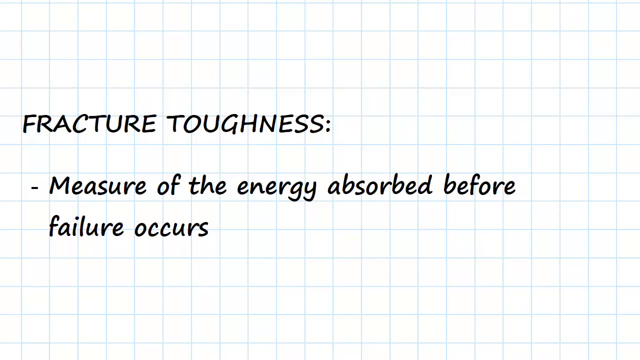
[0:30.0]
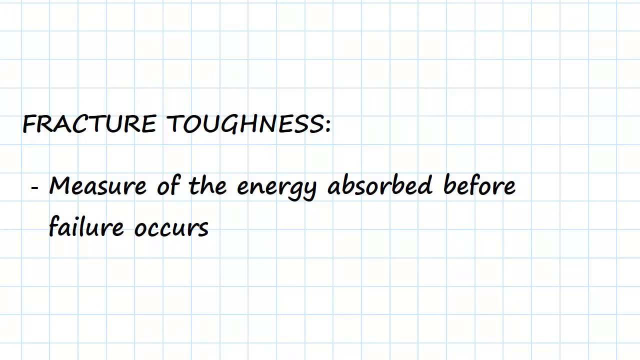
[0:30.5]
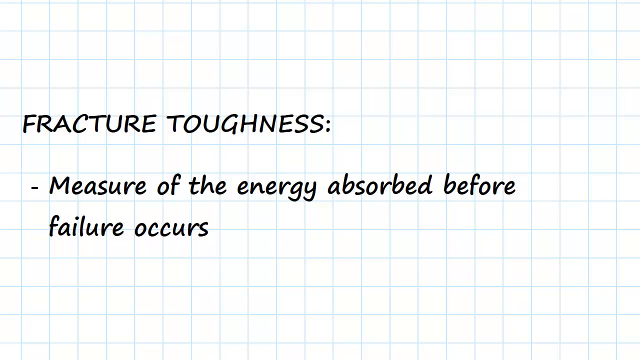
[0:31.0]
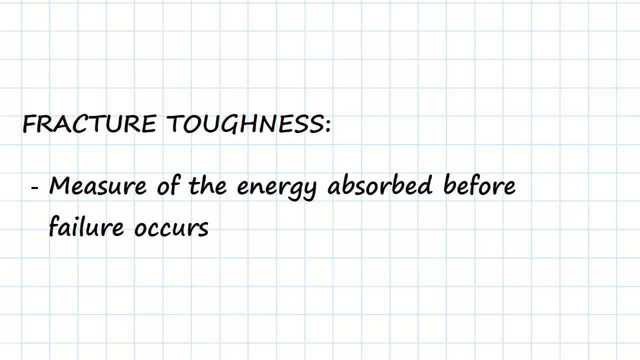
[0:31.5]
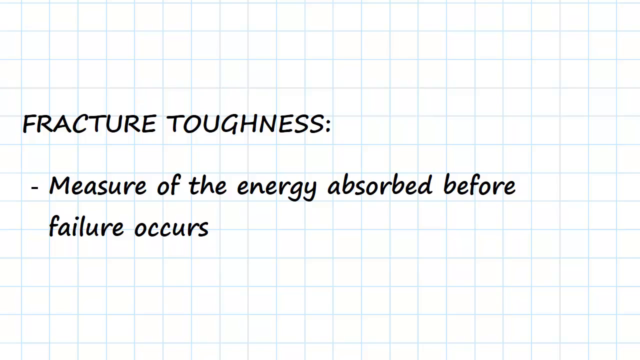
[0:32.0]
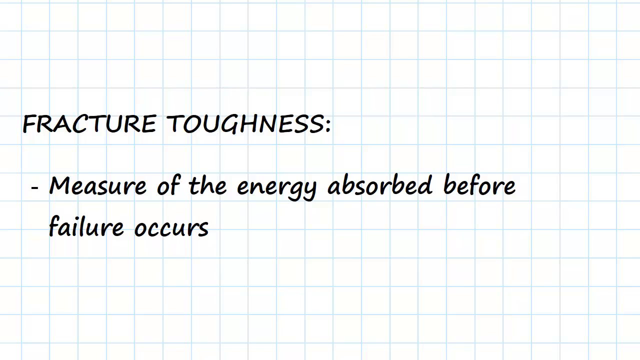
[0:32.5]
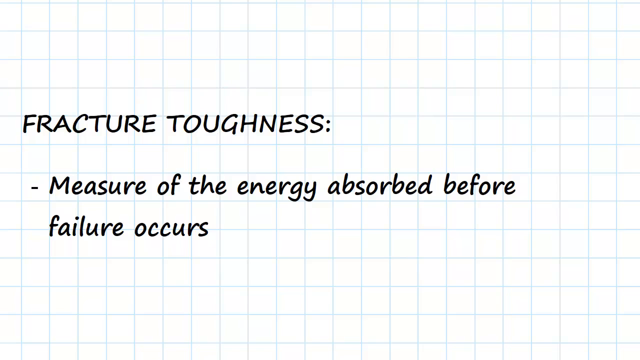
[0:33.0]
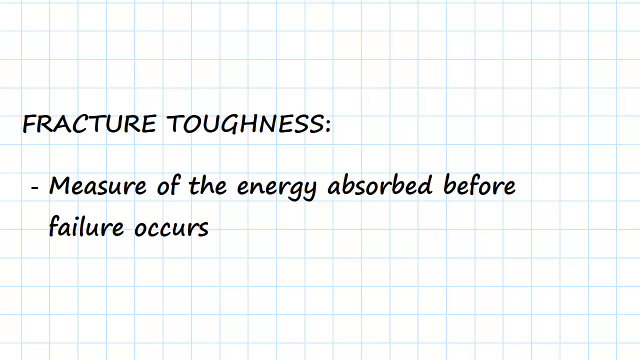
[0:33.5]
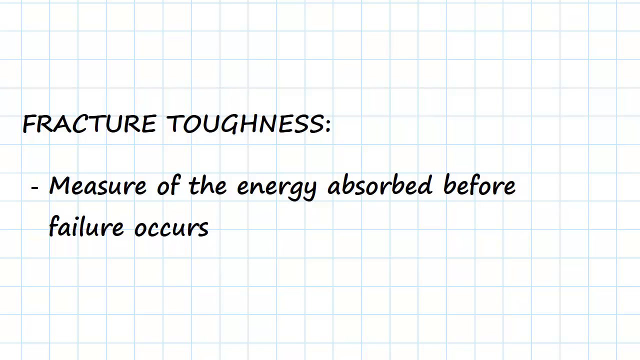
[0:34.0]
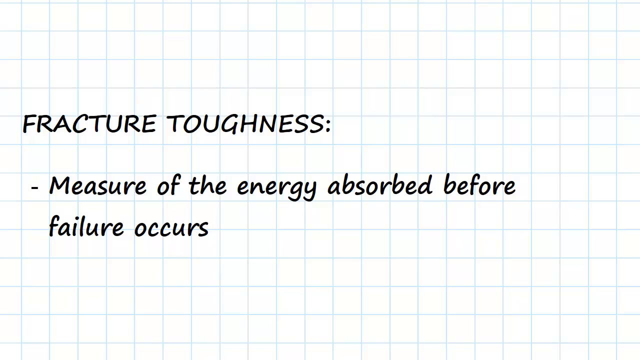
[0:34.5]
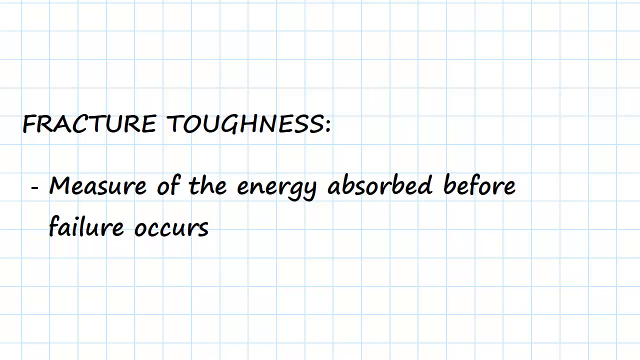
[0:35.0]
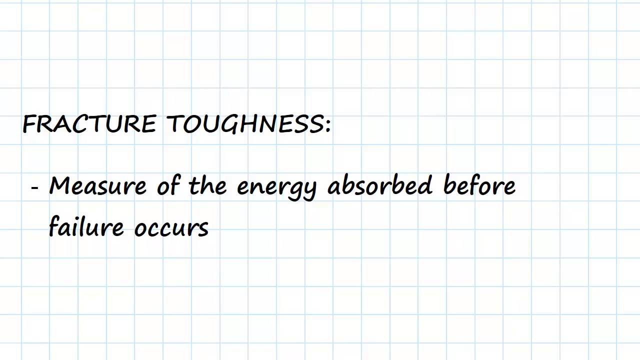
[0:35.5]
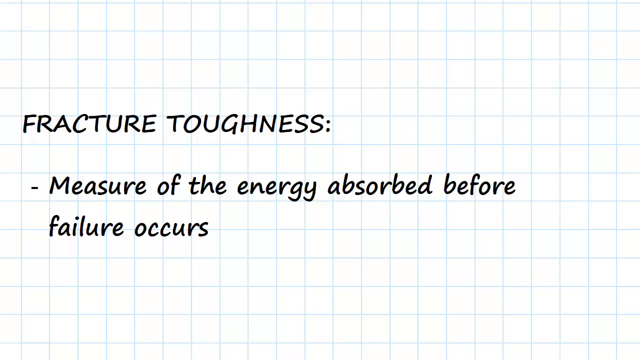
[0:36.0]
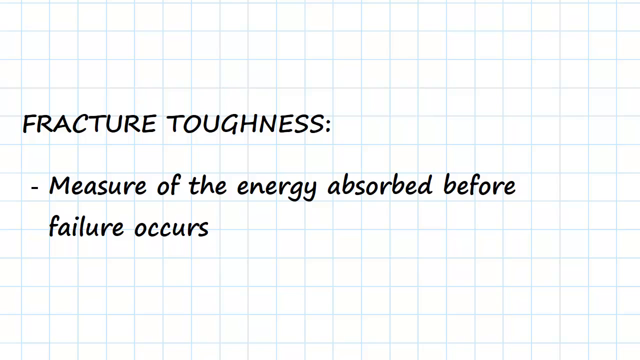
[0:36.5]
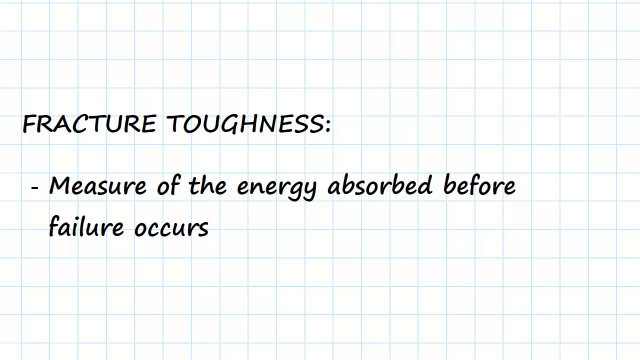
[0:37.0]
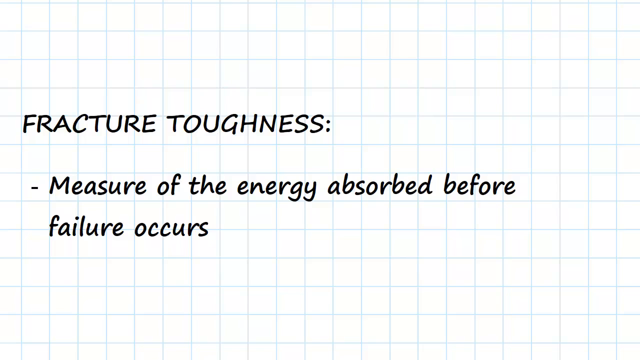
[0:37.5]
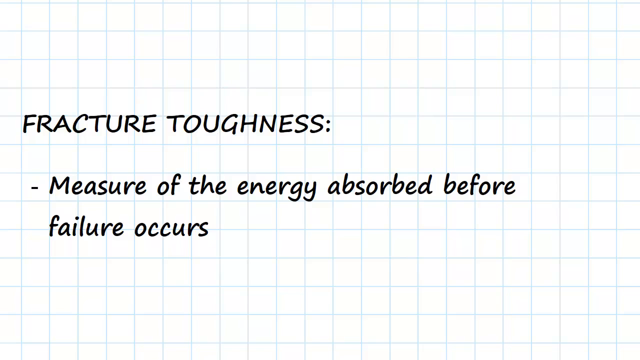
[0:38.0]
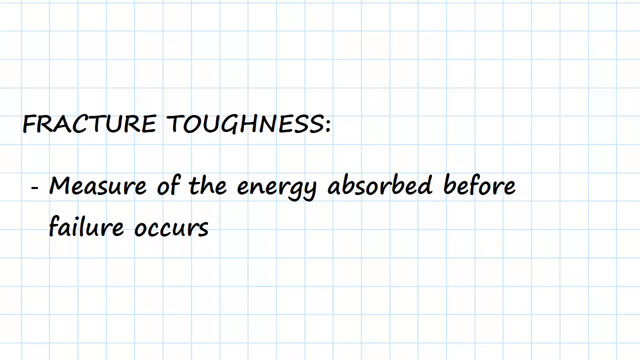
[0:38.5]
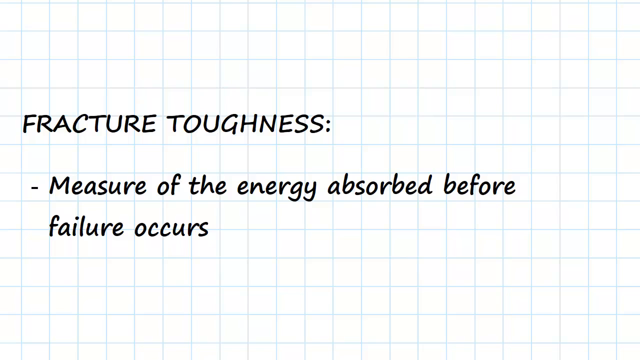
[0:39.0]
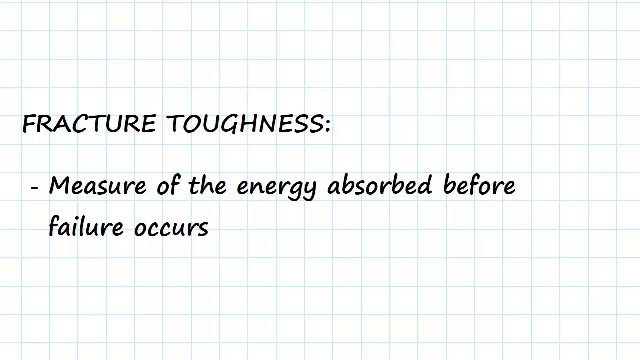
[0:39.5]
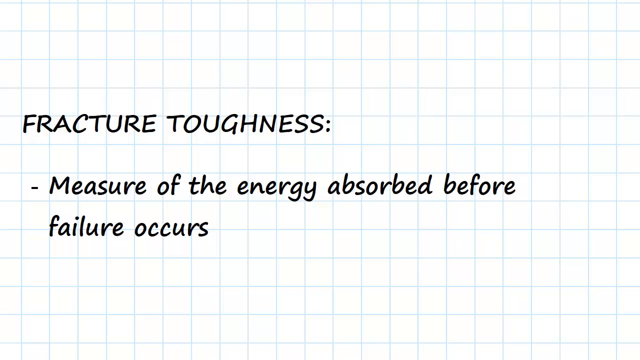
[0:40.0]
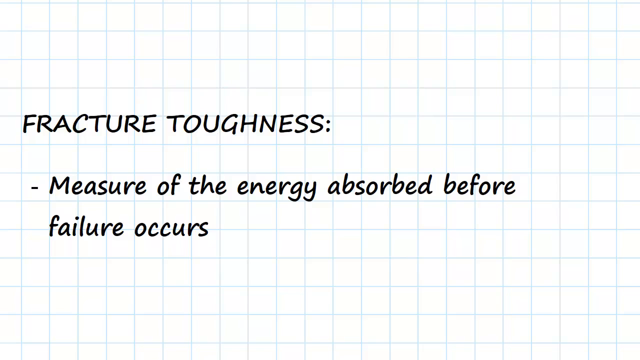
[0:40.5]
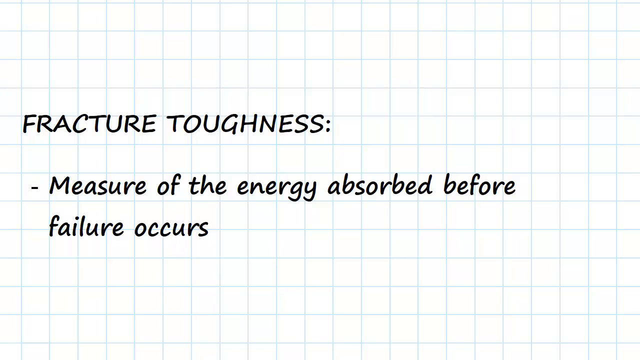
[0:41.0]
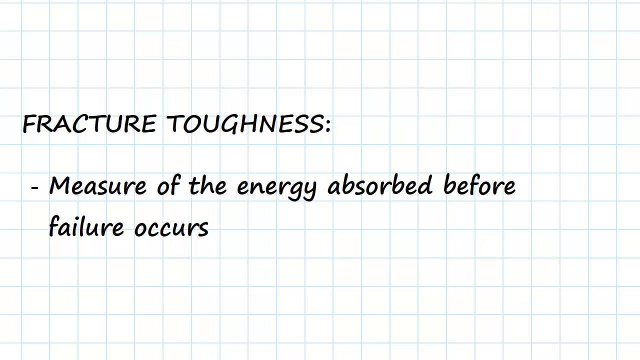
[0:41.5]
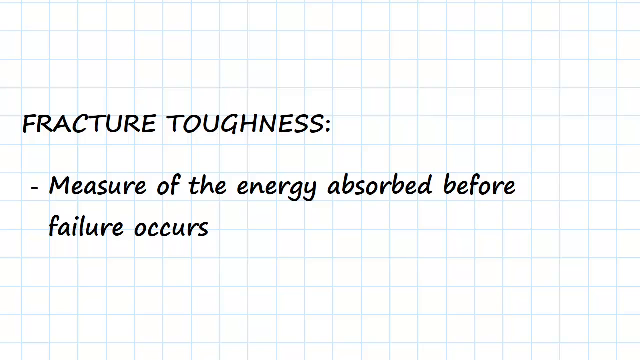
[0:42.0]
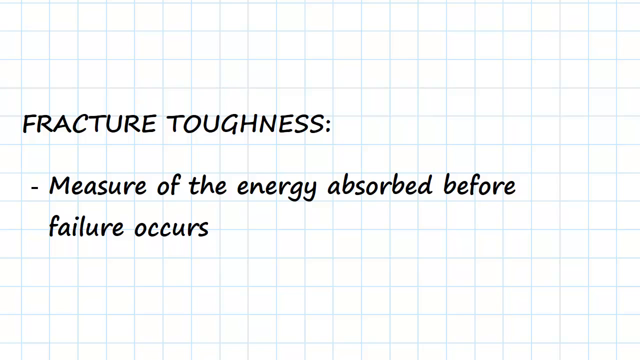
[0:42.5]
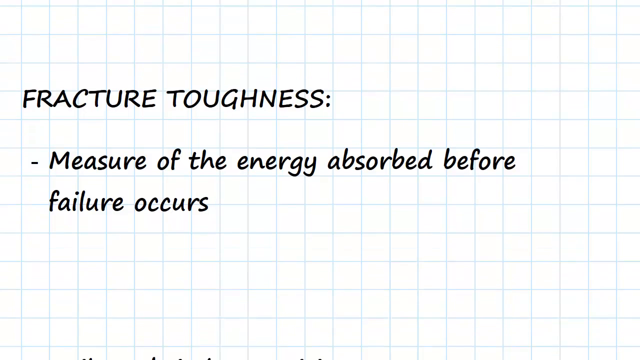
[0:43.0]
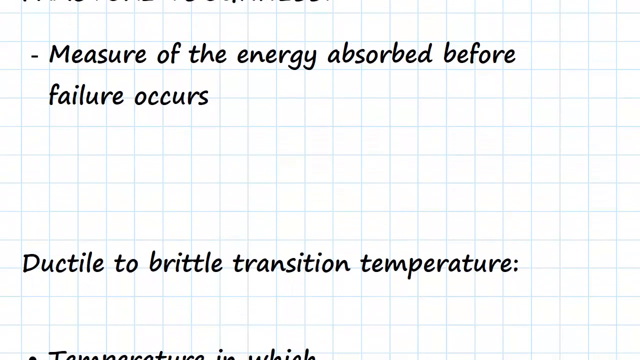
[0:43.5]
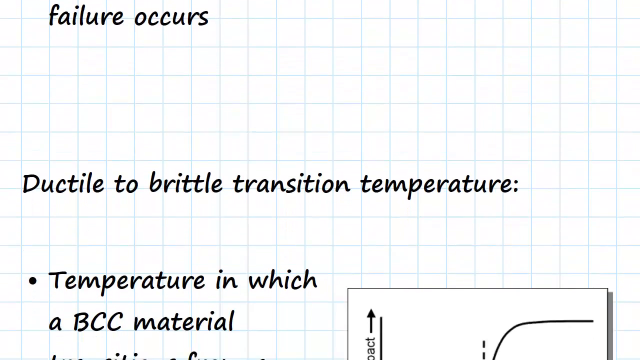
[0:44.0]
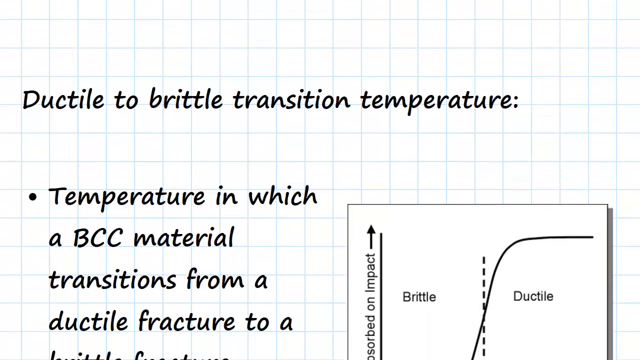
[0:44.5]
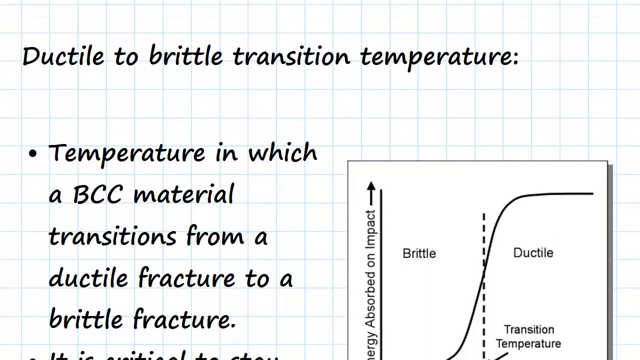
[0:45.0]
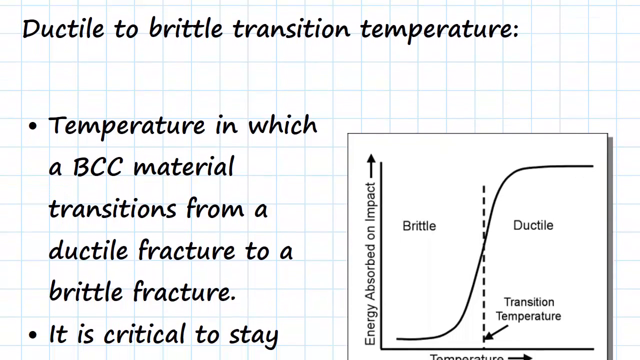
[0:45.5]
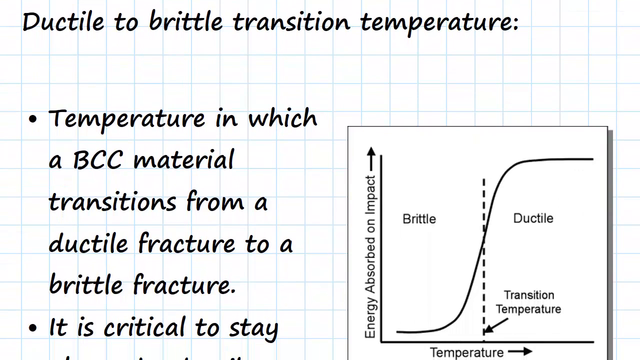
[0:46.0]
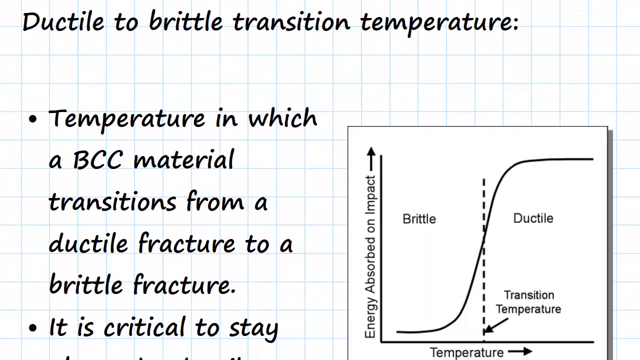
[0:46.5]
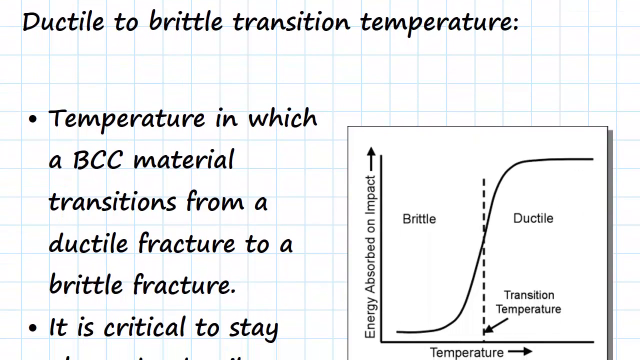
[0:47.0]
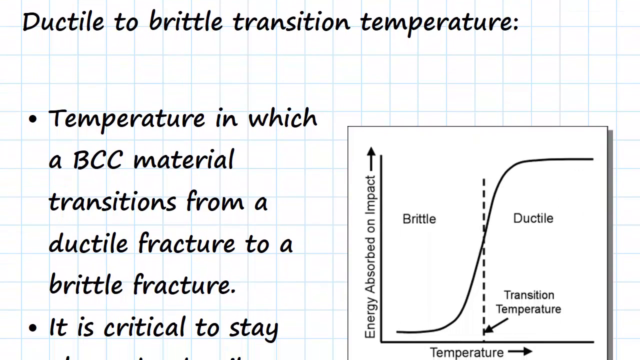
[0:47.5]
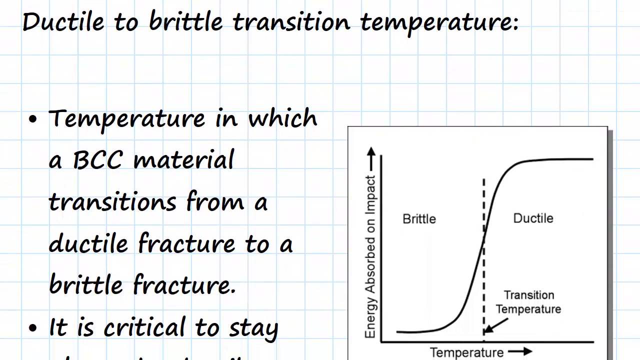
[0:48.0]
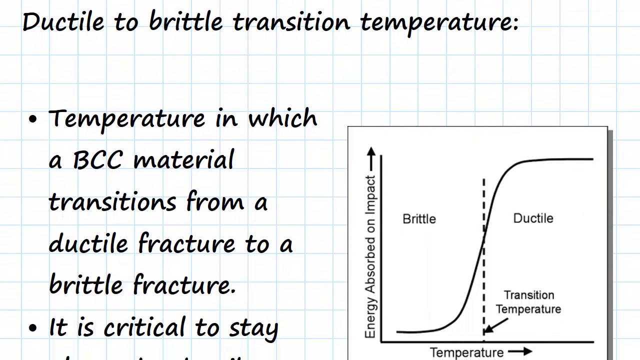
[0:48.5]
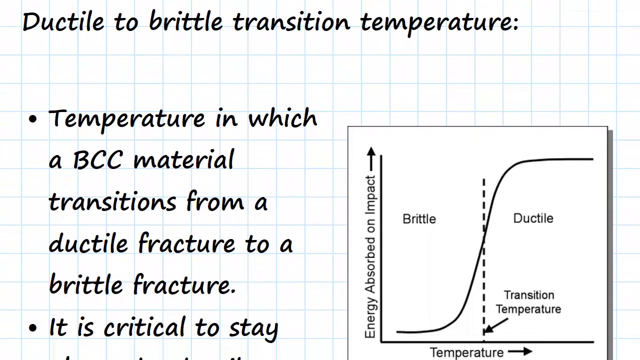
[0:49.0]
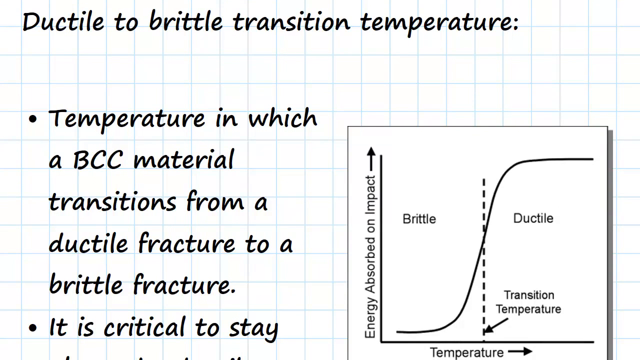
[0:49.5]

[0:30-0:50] On a white grid background with blue lines, the words "fracture toughness, measure of the energy absorbed before failure occurs" are on the screen. The view begins to scroll down, revealing the words "ductile to brittle transition temperature", and finally stops. The words "temperature in which a BCC material transitions from a ductile fracture to a brittle fracture" appear, and below them the text reads "it is critical to stay". To the right is a line graph. Along its left side, going up, are the words "energy absorbed on impact" with an arrow pointing up above them. On the bottom line is the word "temperature" with an arrow pointing right. Inside the graph, on the left-hand side in the middle, is the word "brittle"; dashes separate it from the middle, and on the right side is the word "ductile". Below that, the words "transition temperature" point with an arrow at the bottom of the graph. In between, a line slowly goes up, then goes straight up all the way to the top and to the right of the graph.